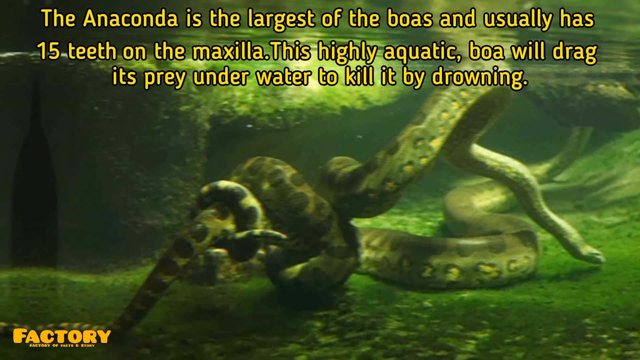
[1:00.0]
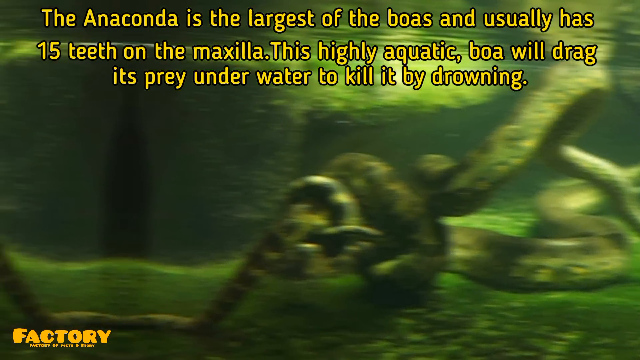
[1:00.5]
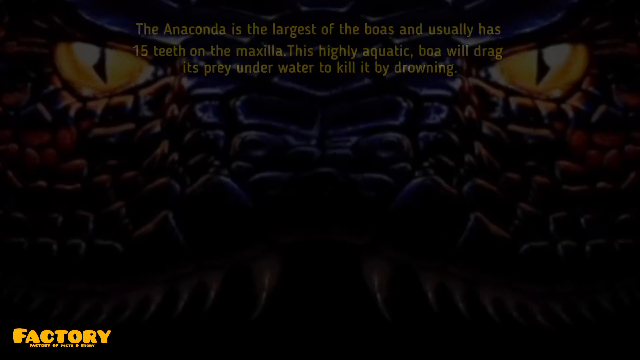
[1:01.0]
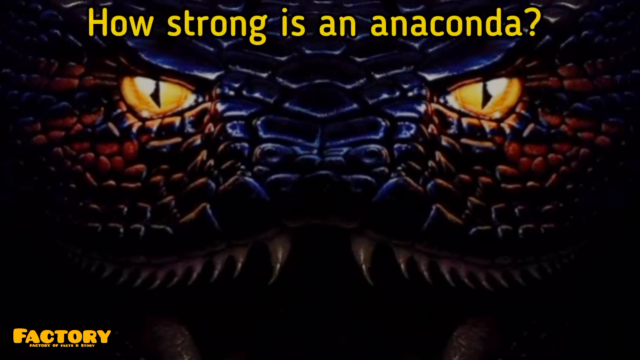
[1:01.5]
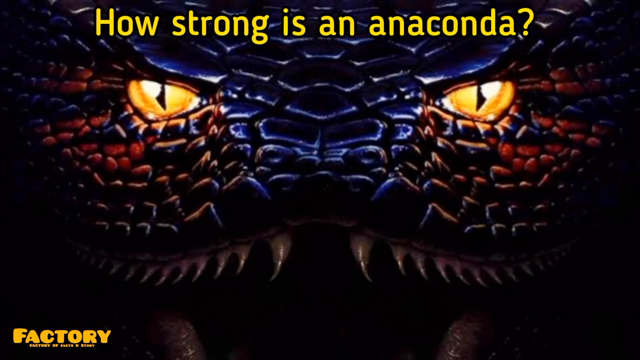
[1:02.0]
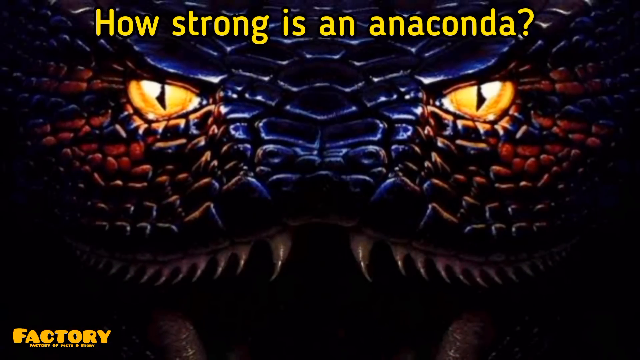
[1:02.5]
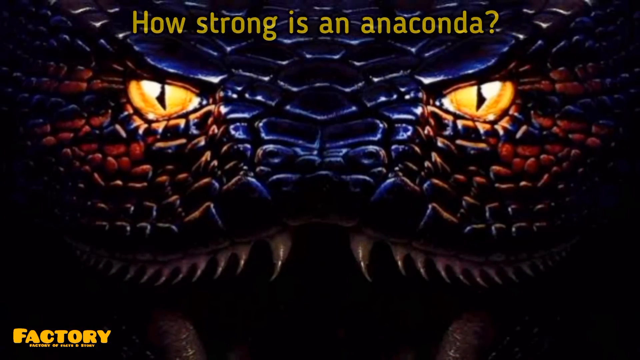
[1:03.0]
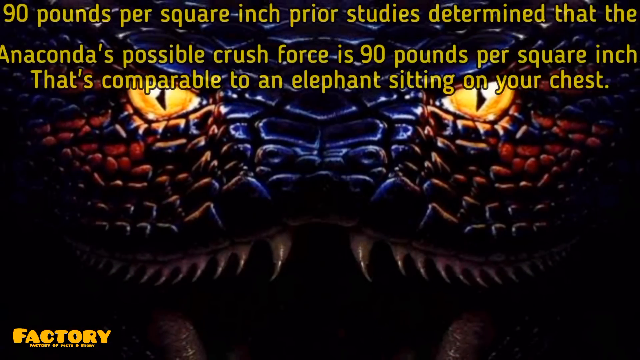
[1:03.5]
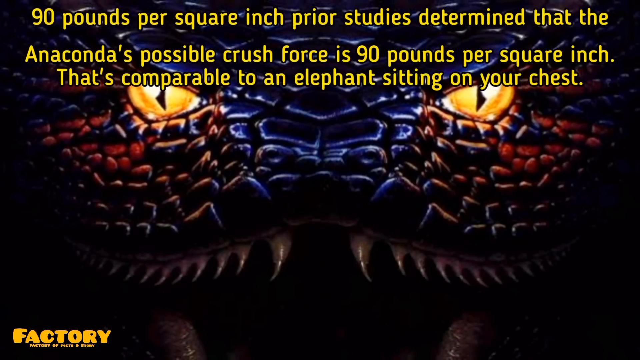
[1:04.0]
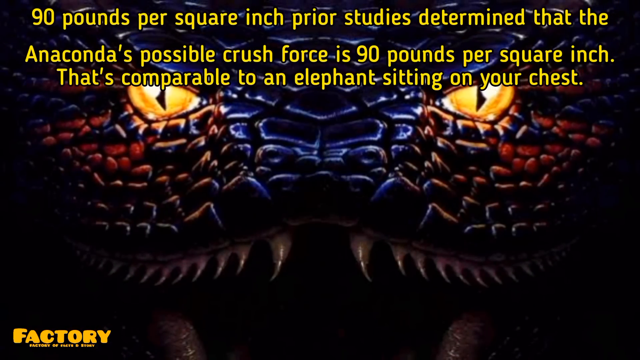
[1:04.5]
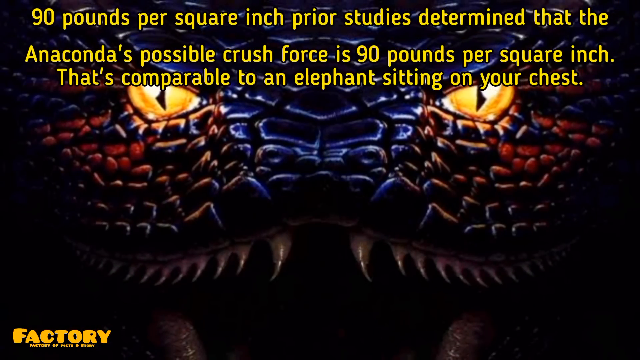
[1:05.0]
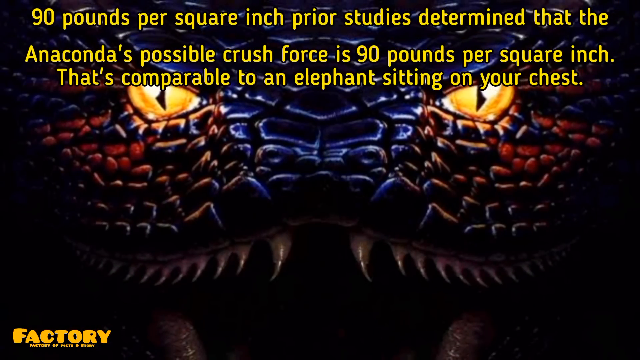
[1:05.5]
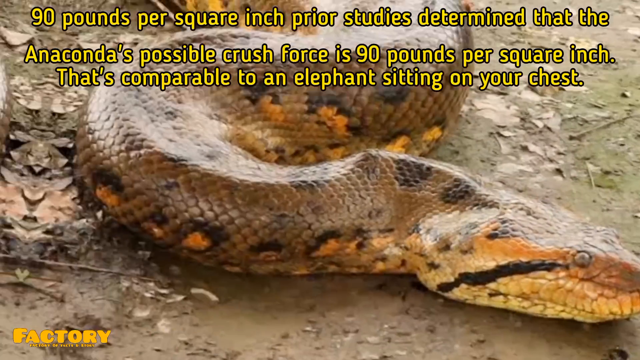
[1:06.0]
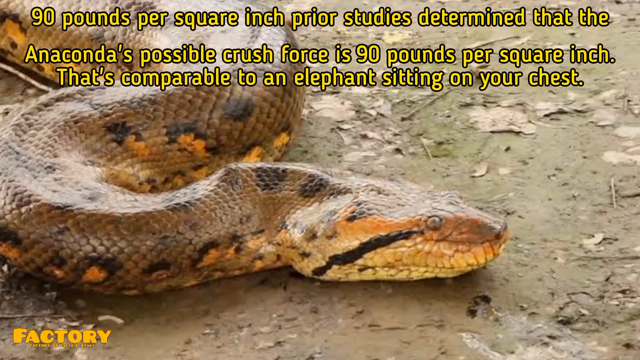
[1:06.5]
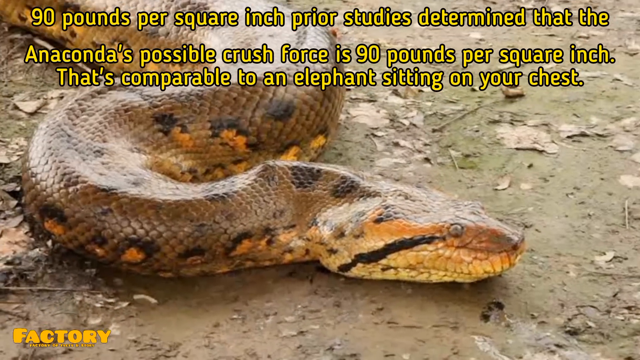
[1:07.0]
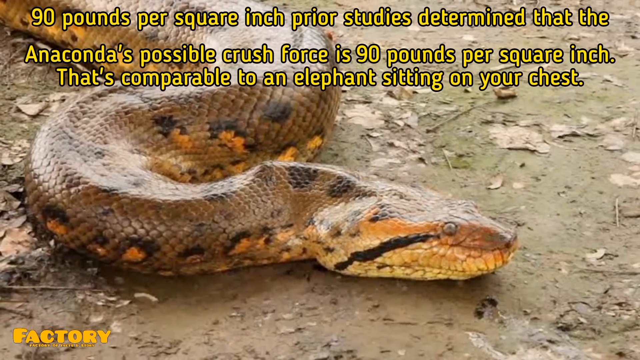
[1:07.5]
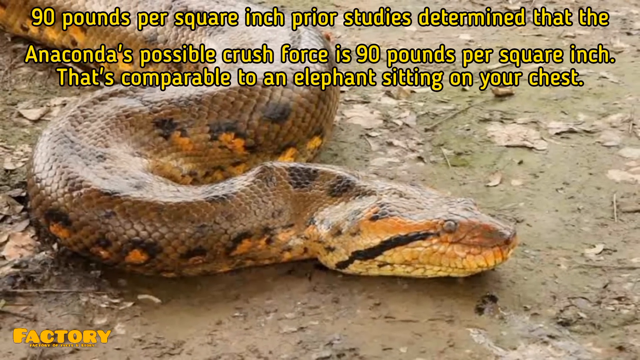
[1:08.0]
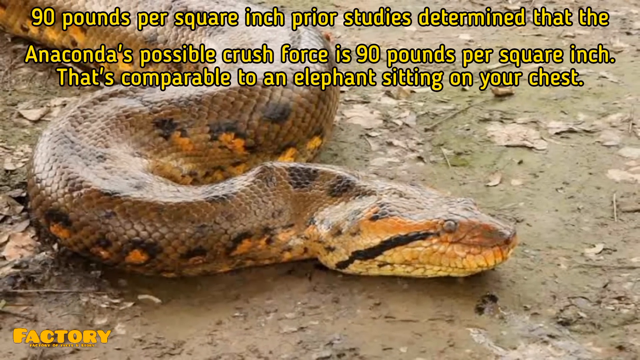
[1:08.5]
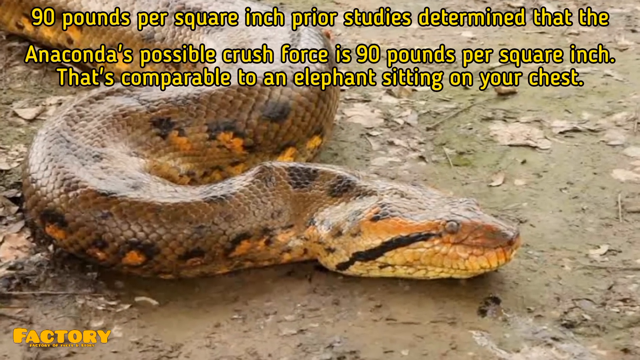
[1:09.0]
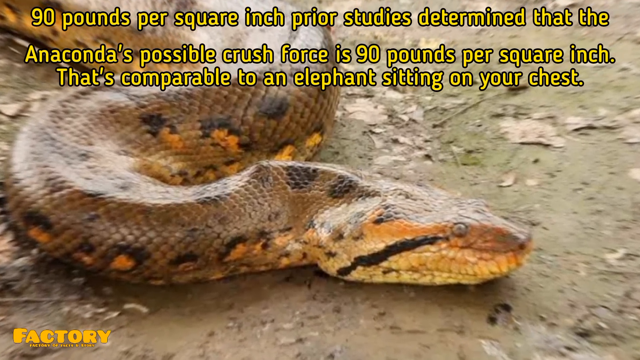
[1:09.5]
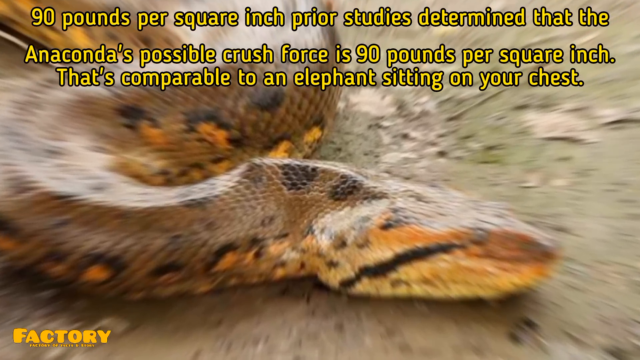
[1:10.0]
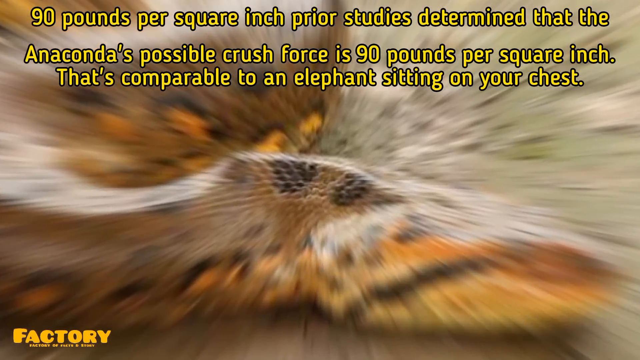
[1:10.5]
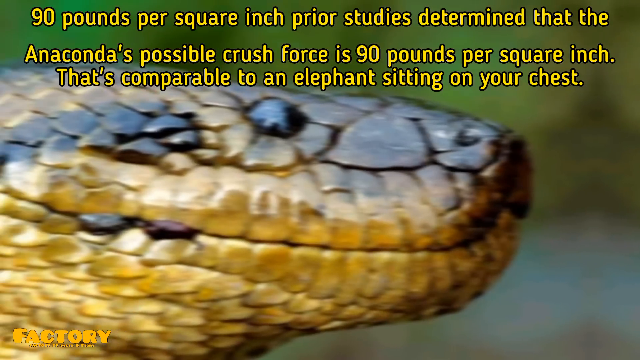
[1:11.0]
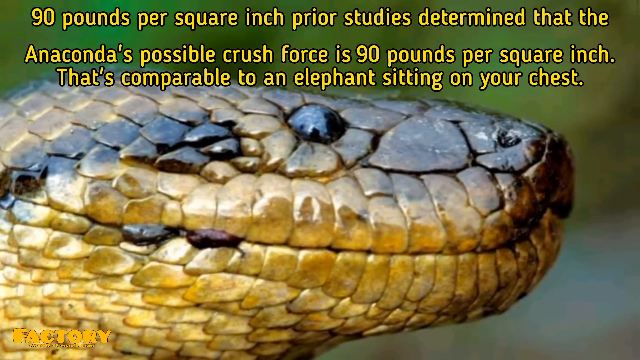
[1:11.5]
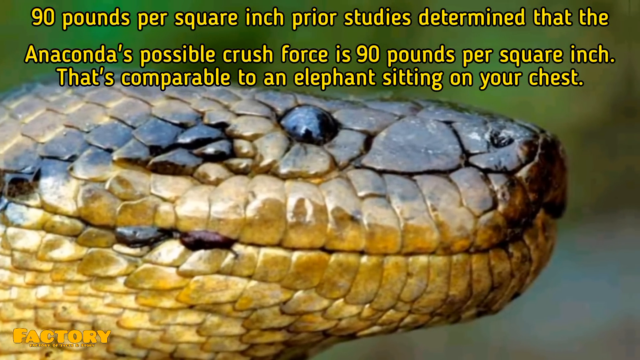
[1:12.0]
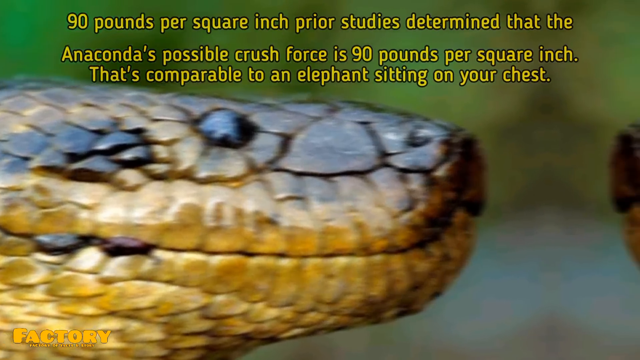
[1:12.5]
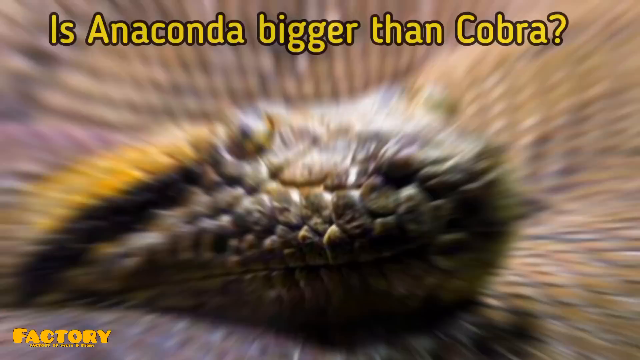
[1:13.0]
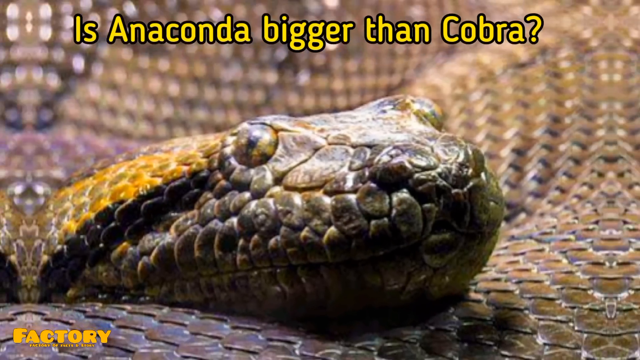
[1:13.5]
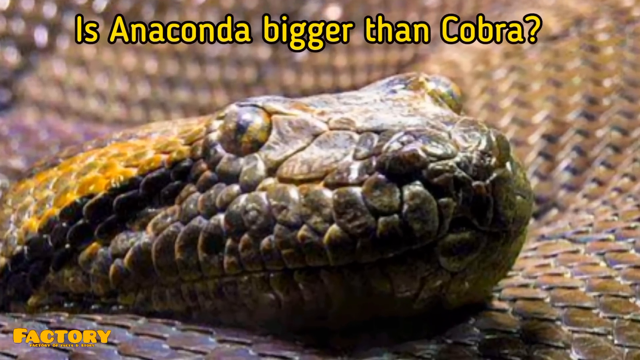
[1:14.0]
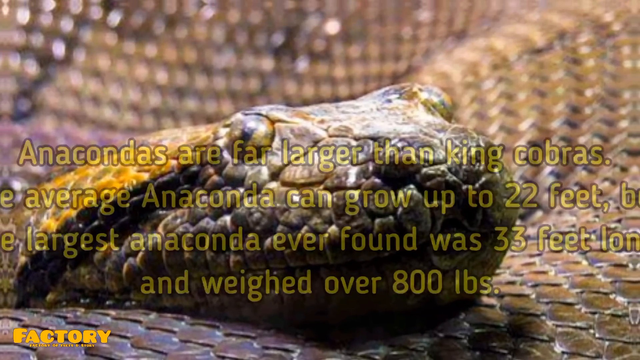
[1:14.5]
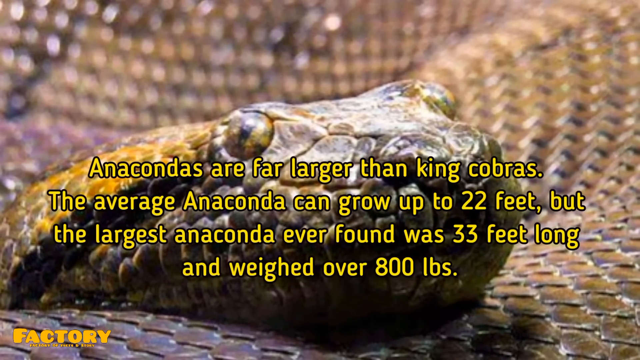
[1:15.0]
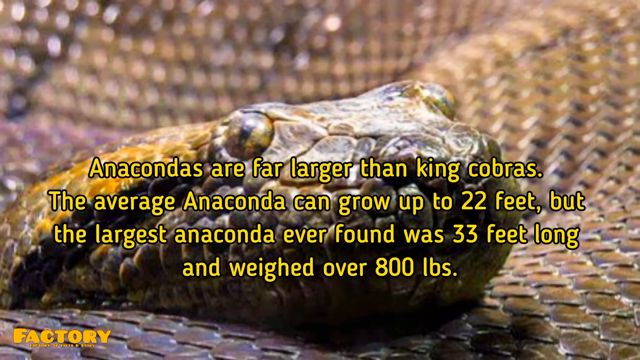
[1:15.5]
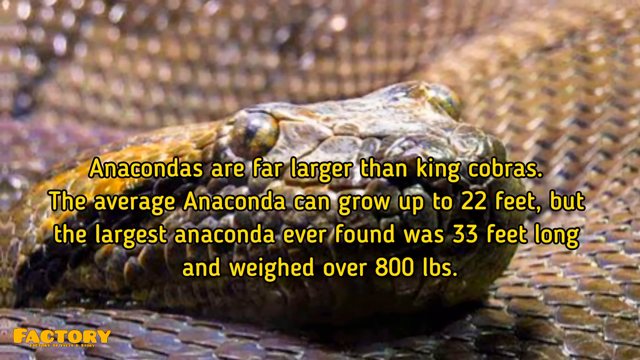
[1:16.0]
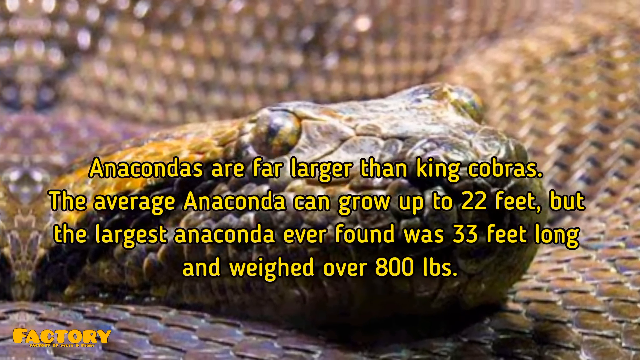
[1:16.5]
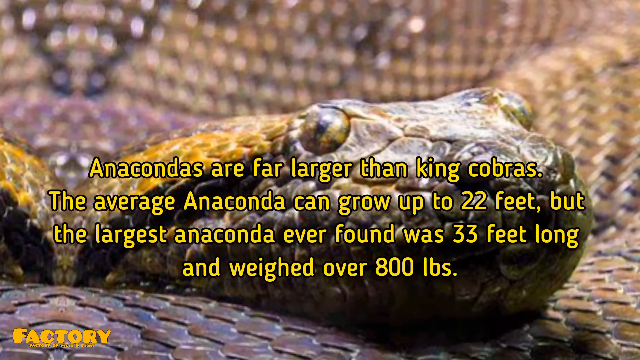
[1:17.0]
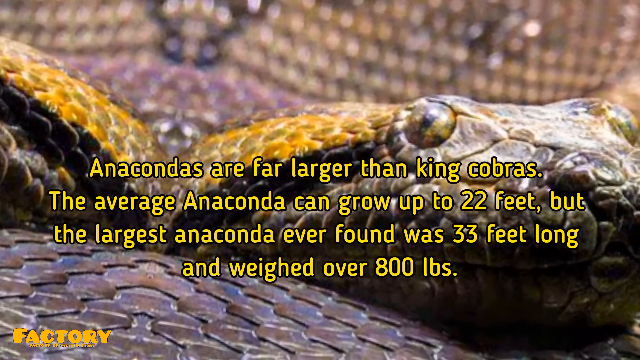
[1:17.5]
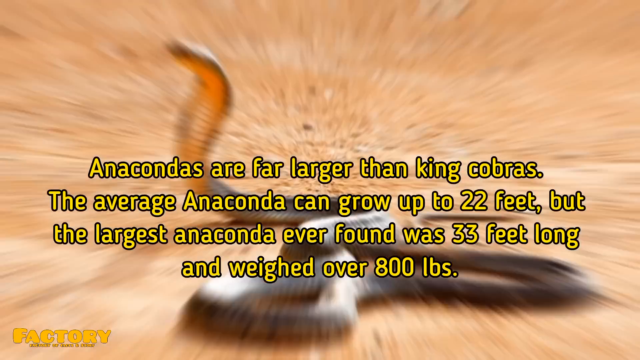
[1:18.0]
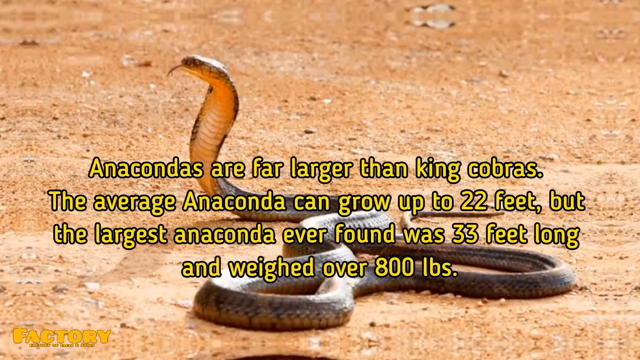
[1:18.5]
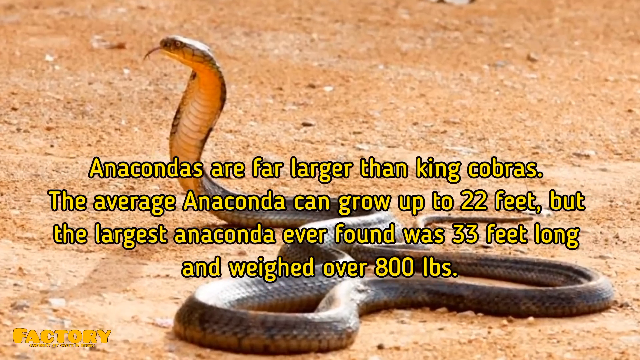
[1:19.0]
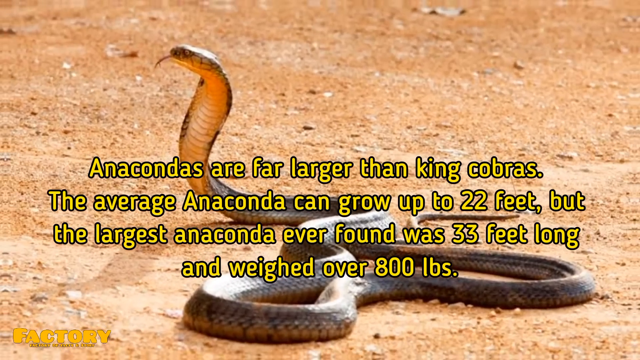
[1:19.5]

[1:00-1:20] The scene changes to a drawing of an anaconda, very black with yellow eyes and very white sharp teeth. Yellow text at the top reads "how strong is an anaconda." The text changes to "90 pounds per square inch. Prior studies determined that the anaconda's possible crush force is 90 pounds per square inch. That's comparable to an elephant sitting on your chest." The scene switches to a side image of an actual anaconda on a dirt floor, looking to the right, very brownish with black and orange spots. Next is a close-up shot of an anaconda's face, then a different anaconda with the text "is anaconda bigger than cobra" at the very top of the video. The text changes, this time appearing in the bottom half of the video in yellow: "anacondas are far larger than king cobras. The average anaconda can grow up to 22 feet. The largest anaconda ever found was 33 feet long and weighed over 800 pounds." The last scene shows an anaconda in a sort of desert-like area.